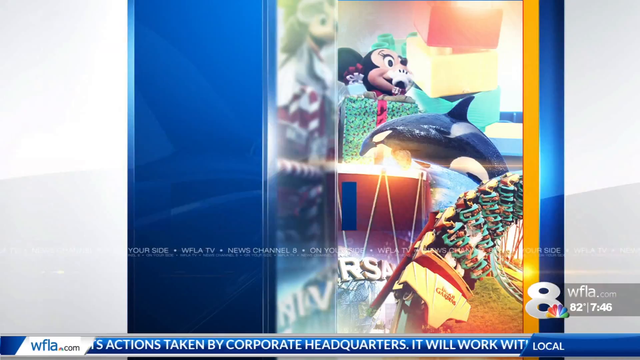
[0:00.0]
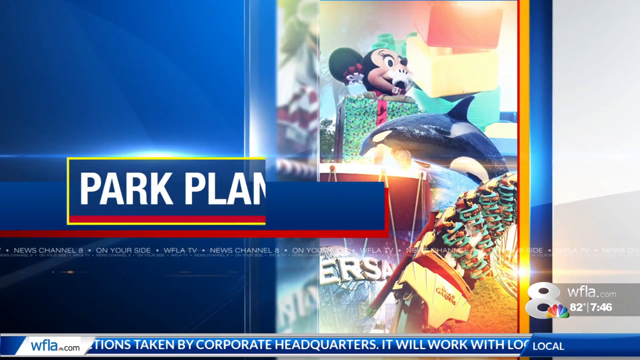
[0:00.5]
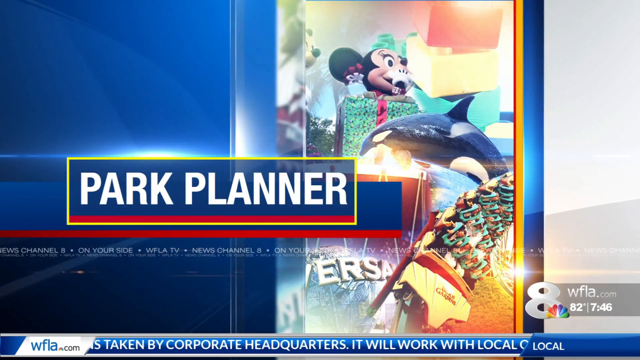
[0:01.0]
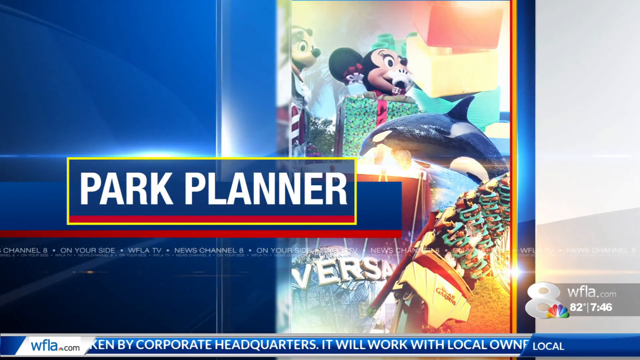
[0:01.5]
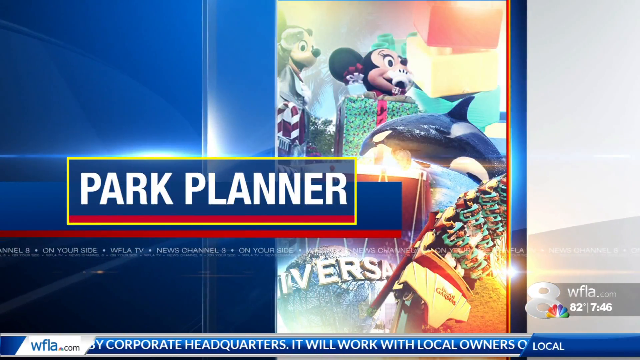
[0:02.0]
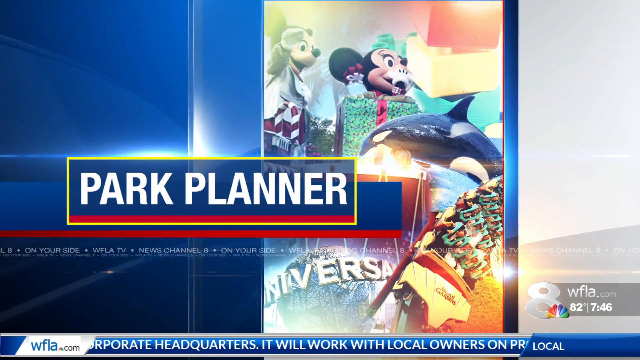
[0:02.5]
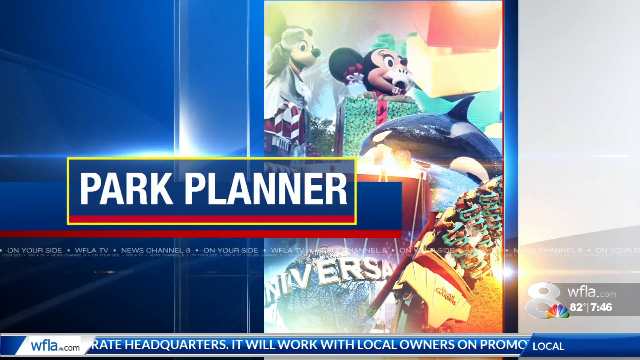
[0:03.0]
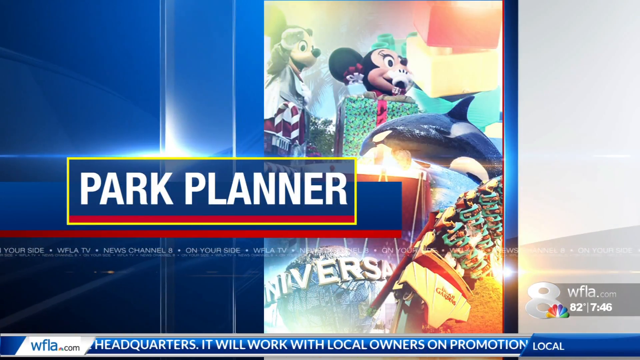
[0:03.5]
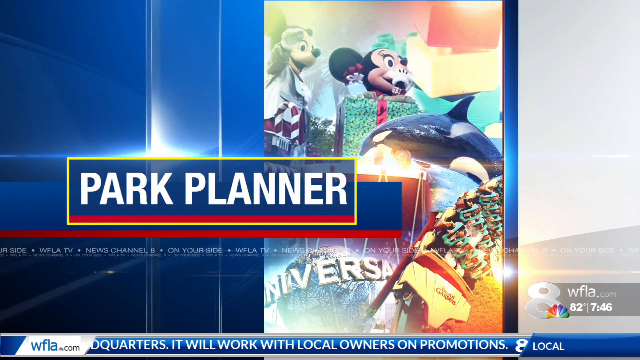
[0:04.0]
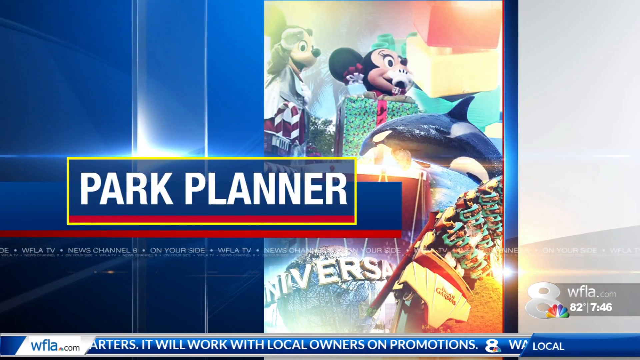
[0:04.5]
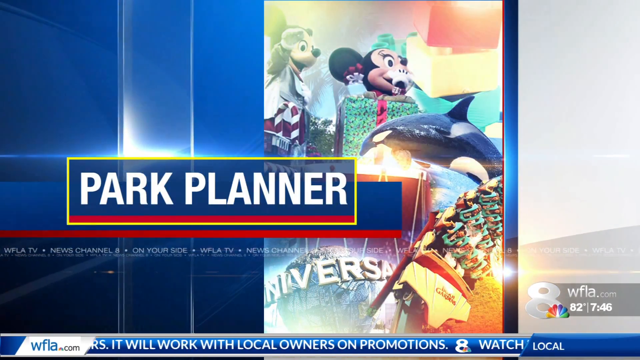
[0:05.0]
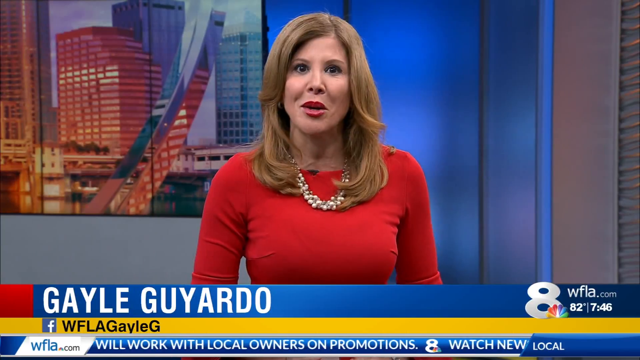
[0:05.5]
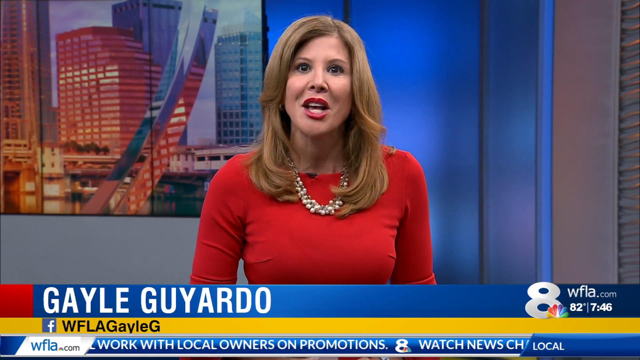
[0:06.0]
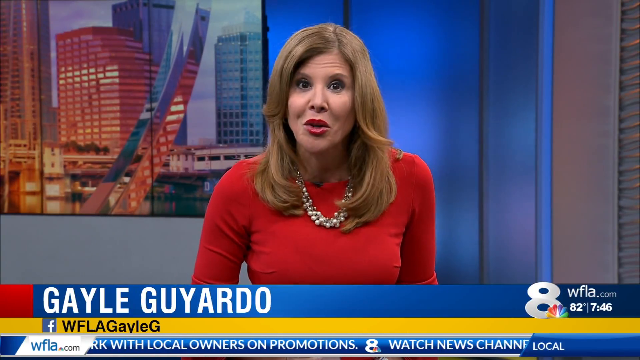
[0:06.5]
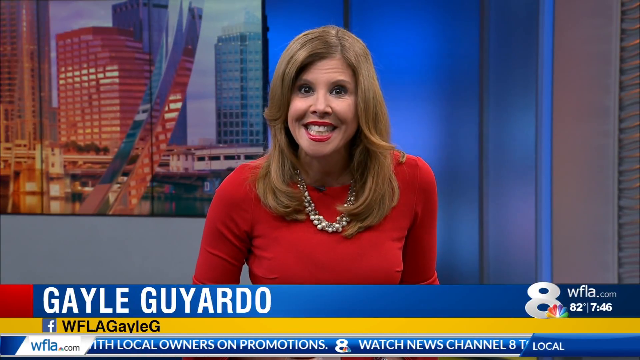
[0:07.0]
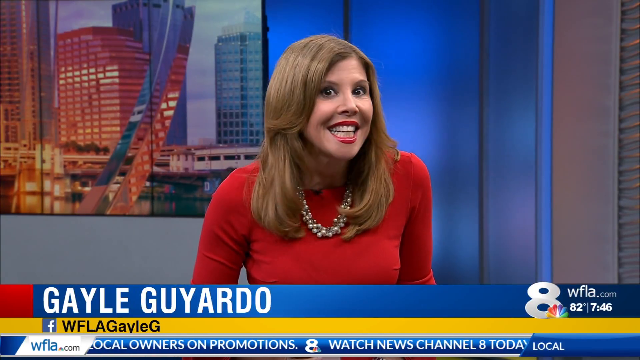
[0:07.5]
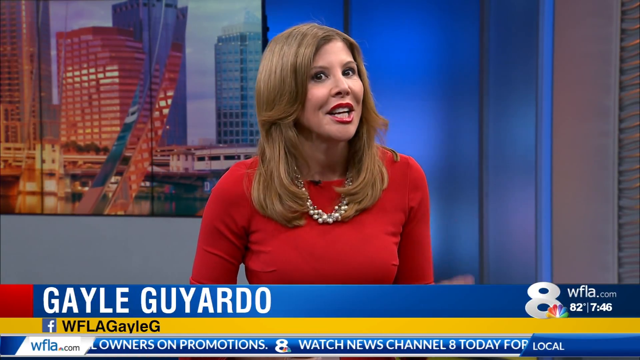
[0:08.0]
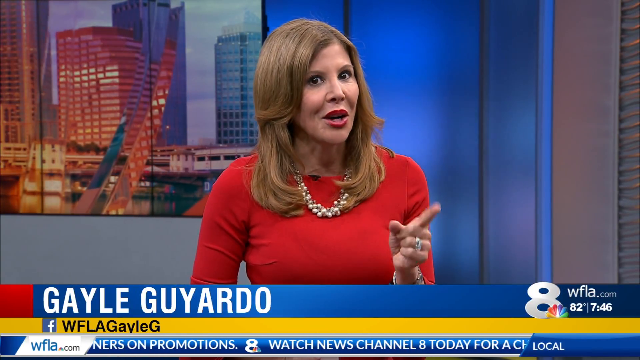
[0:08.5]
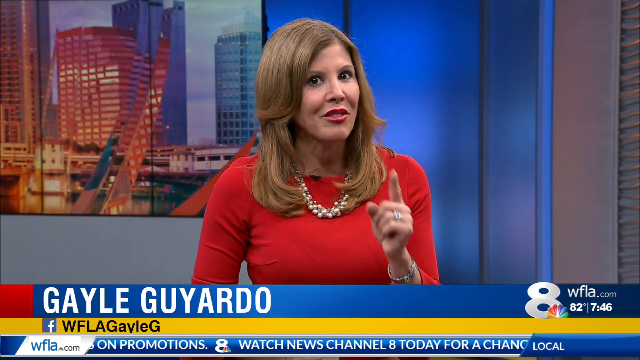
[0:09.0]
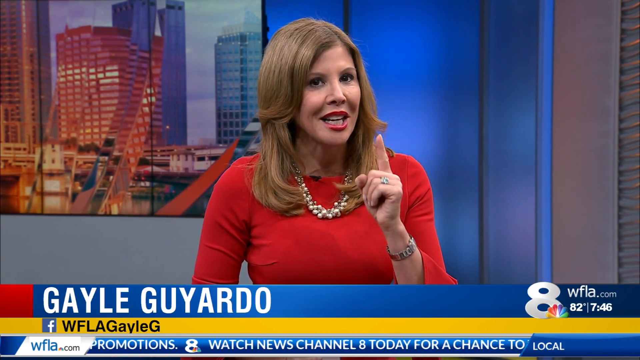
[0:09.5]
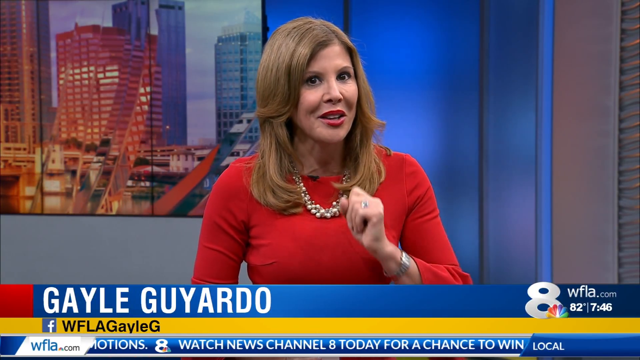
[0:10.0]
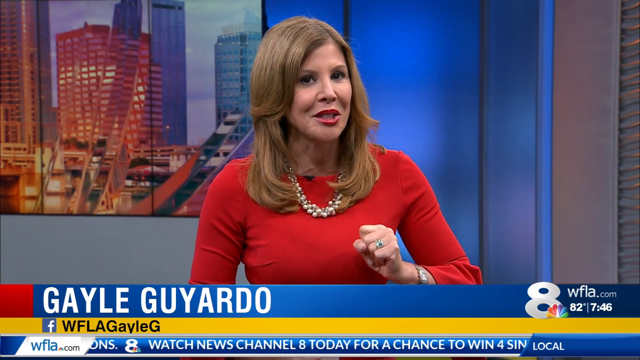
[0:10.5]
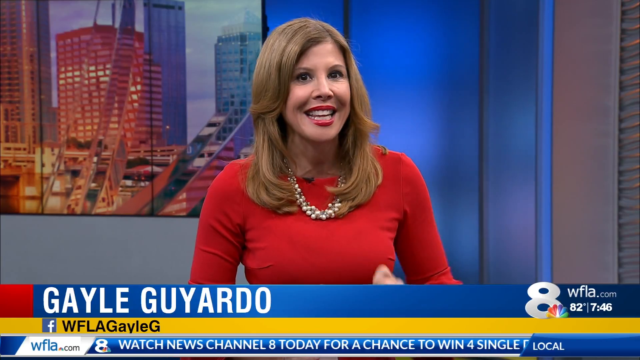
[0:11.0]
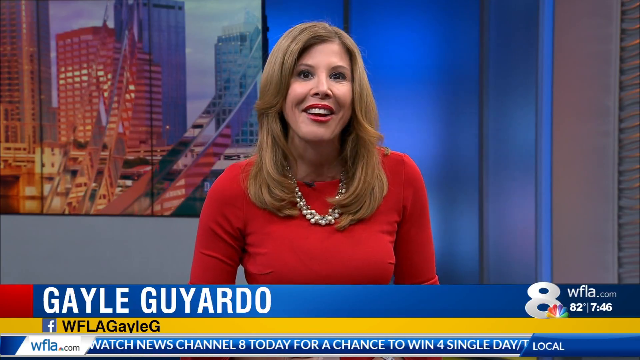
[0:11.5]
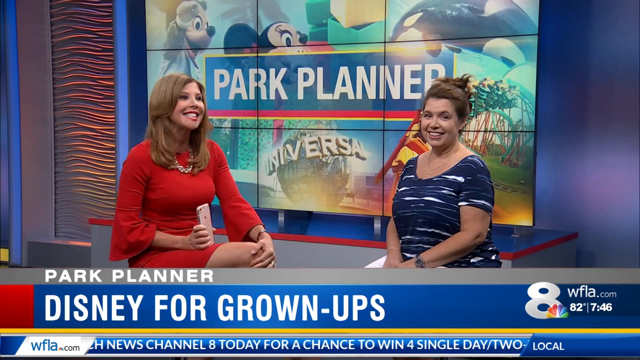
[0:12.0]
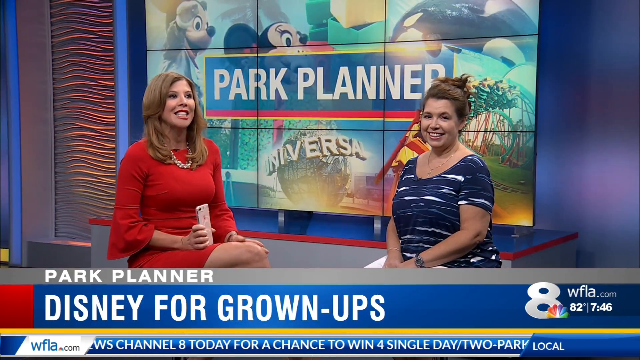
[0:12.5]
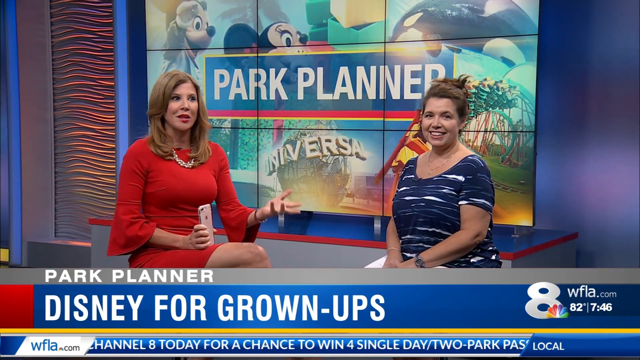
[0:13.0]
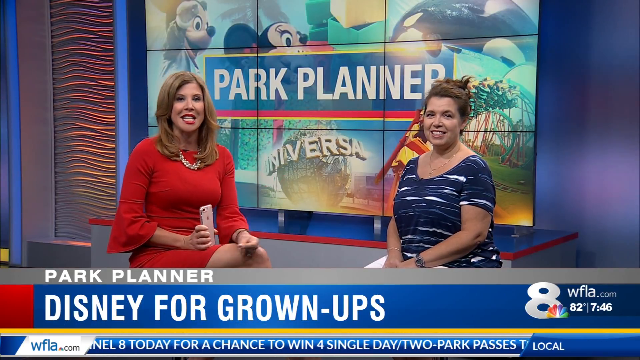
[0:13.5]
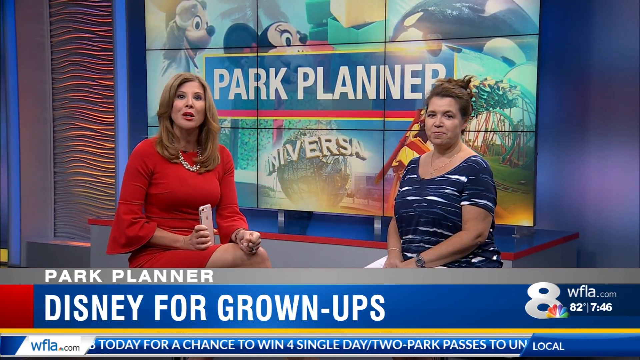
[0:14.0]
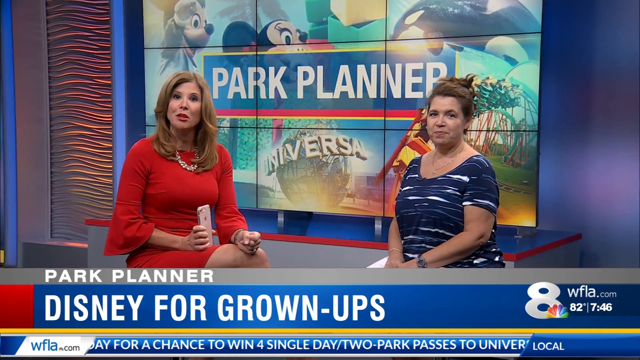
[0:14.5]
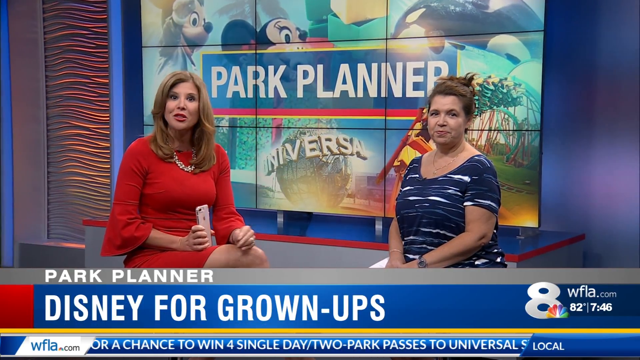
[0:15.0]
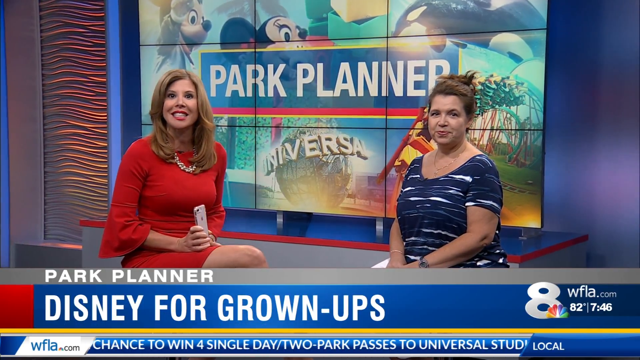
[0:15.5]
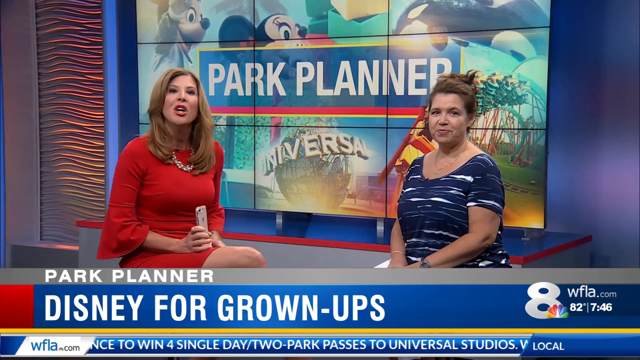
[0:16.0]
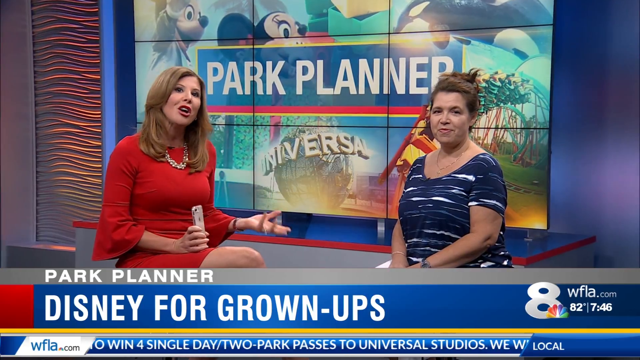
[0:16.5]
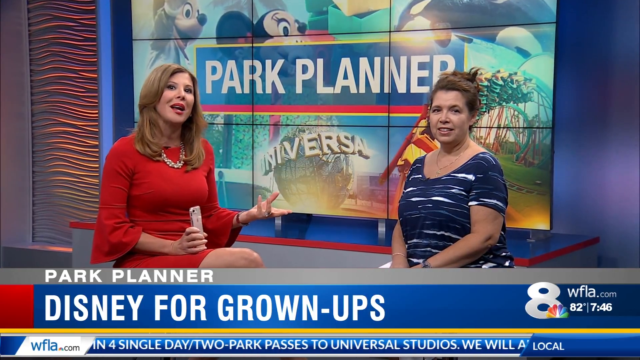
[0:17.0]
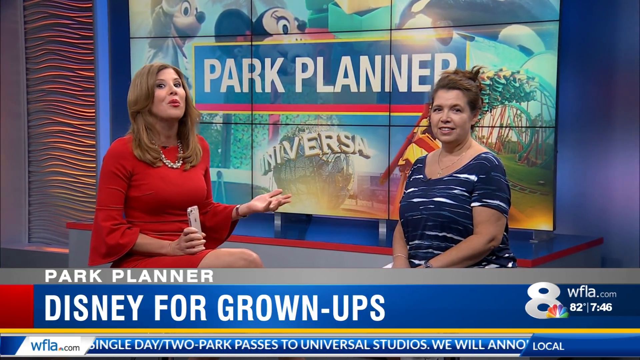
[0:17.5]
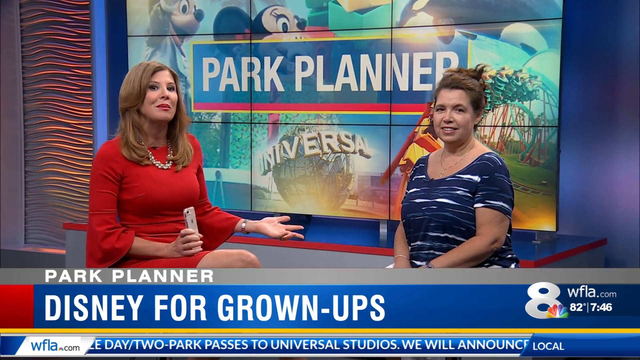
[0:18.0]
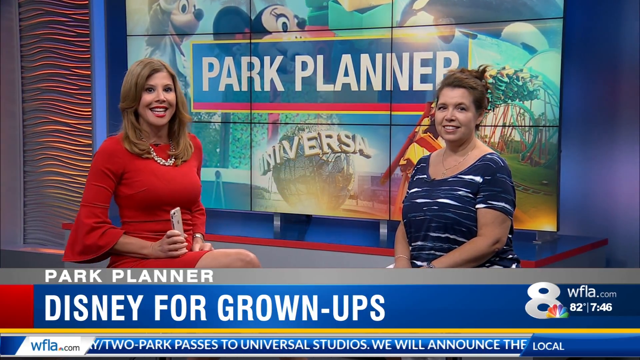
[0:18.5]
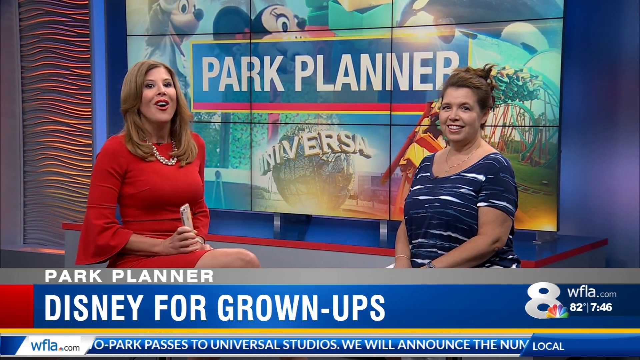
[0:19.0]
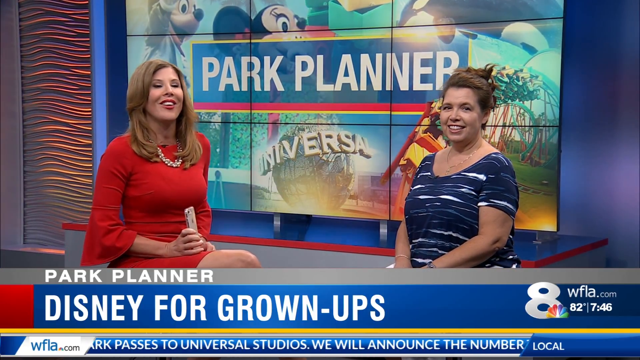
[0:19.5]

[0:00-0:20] A news broadcast from WFLA.com opens with a title reading "park planner" over imagery of a Disney theme park in the background. A news anchor named Gayle Guyardo comes on screen, wearing a red dress with large bell sleeves and a thick pearl necklace; her hair is medium length and very light brown. She smiles and speaks. She is joined by a woman in a blue and white T-shirt and a gold necklace, with brown hair tied up in a bun. Behind the two women is a screen saying "park planner", and a blue banner with white text at the bottom of the screen reads "Disney for grownups" and stays on screen the entire time. The women begin speaking to each other, seated on two stools right in front of a screen in the newsroom. The broadcast is channel 8, an NBC affiliate.